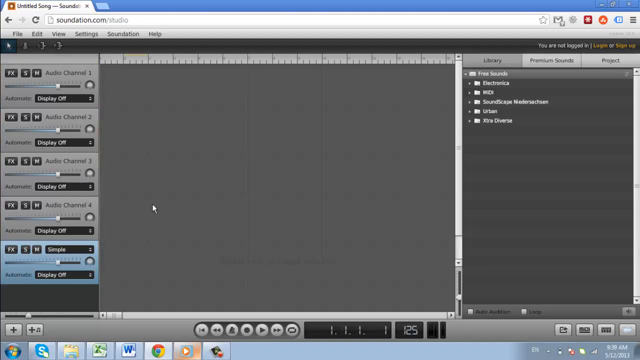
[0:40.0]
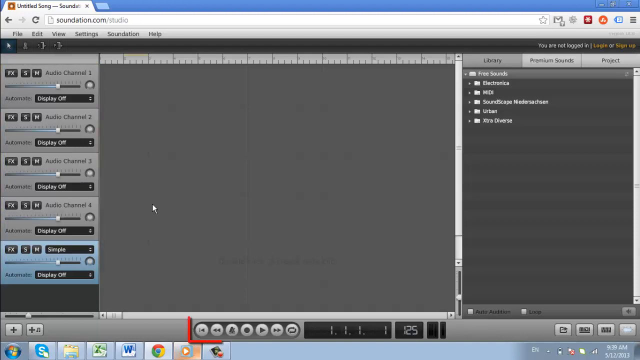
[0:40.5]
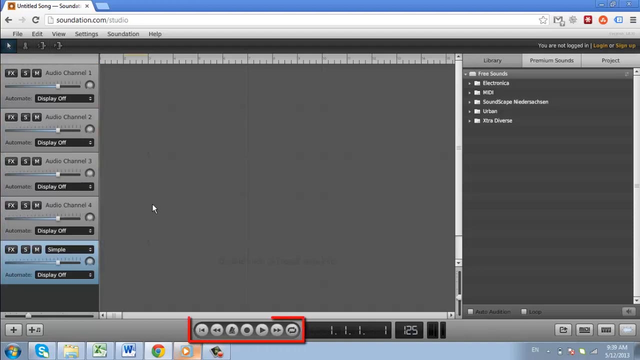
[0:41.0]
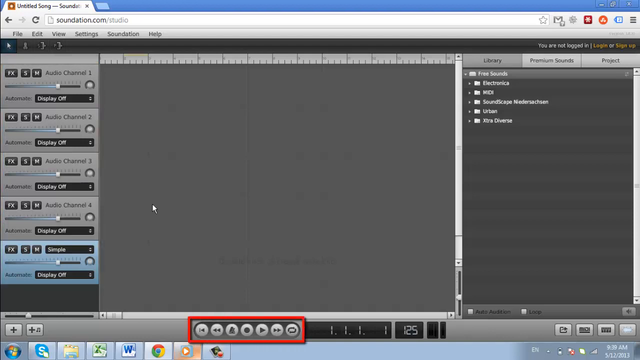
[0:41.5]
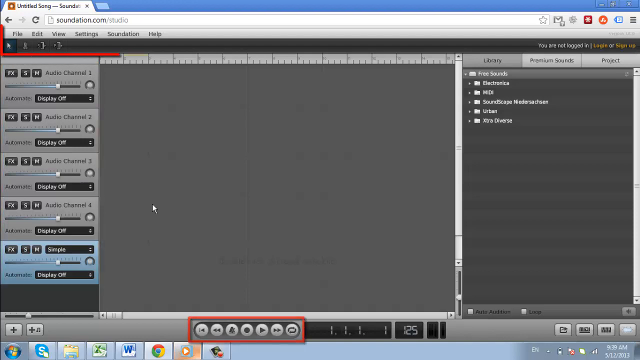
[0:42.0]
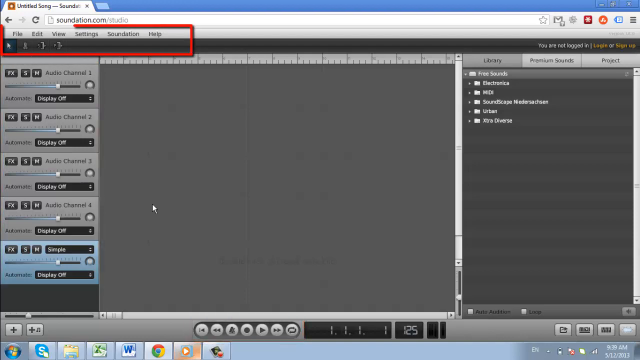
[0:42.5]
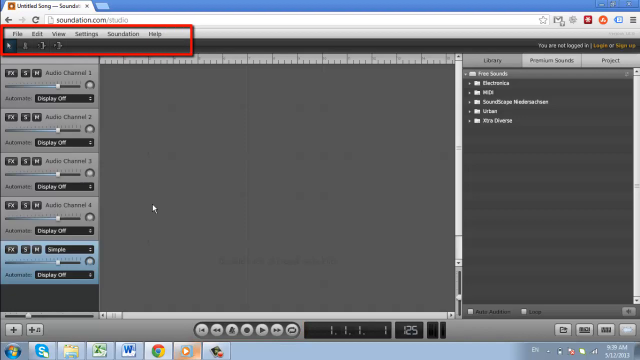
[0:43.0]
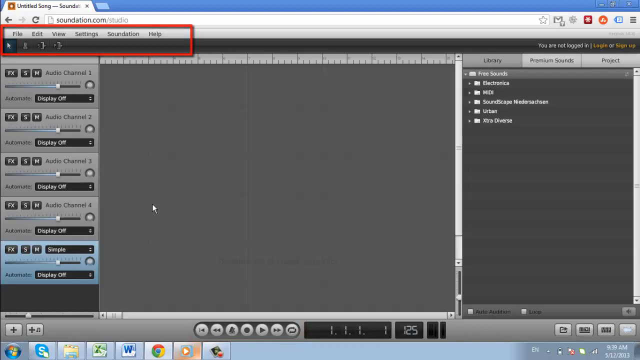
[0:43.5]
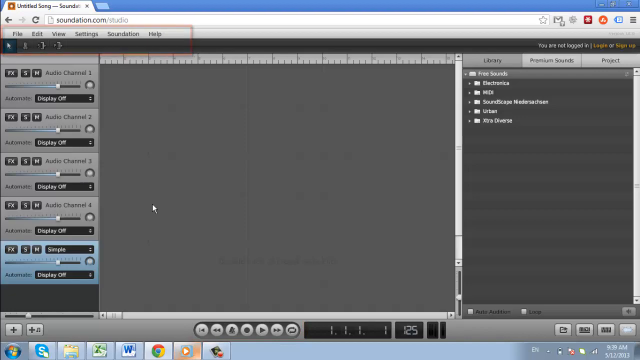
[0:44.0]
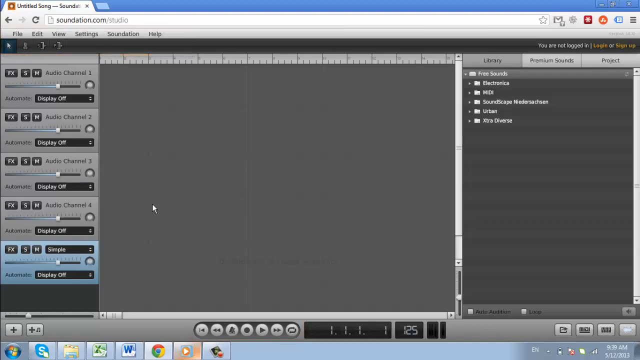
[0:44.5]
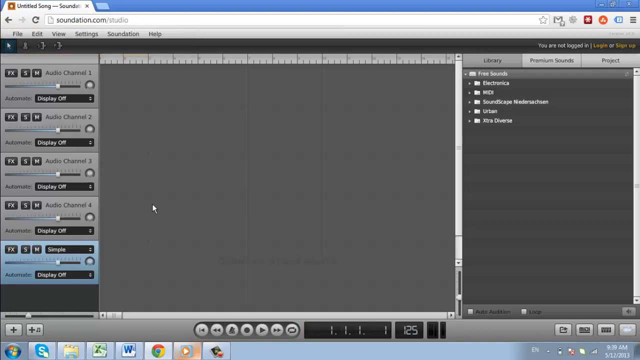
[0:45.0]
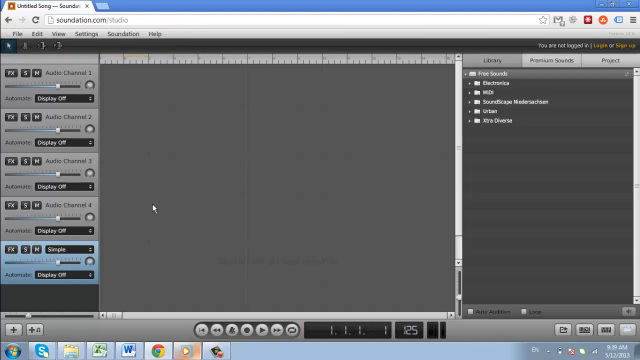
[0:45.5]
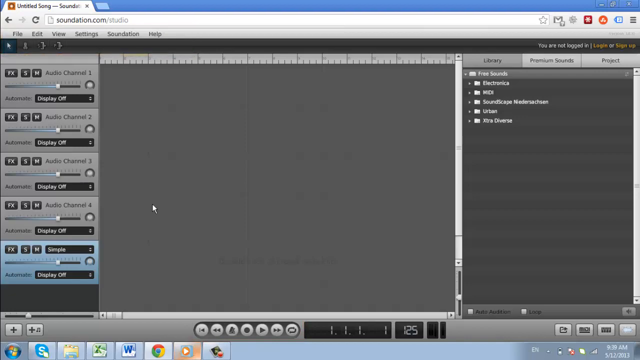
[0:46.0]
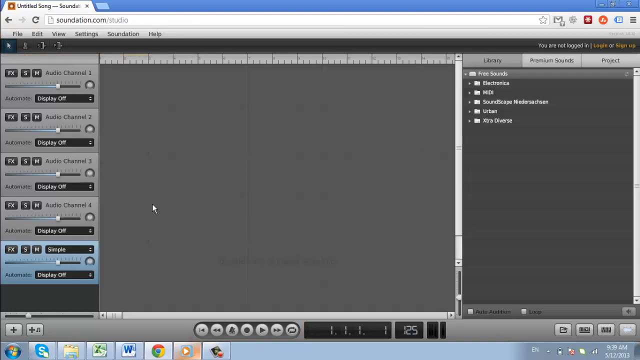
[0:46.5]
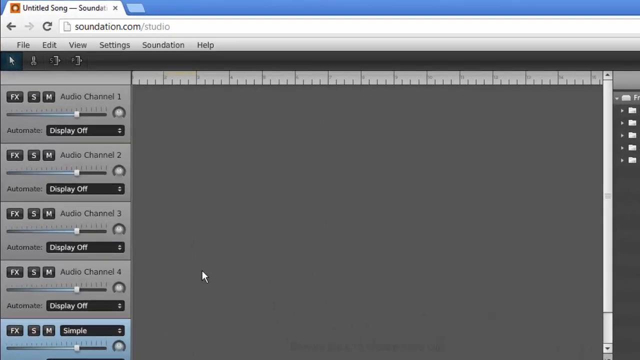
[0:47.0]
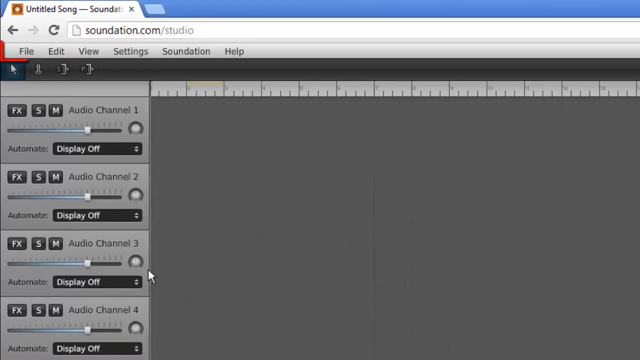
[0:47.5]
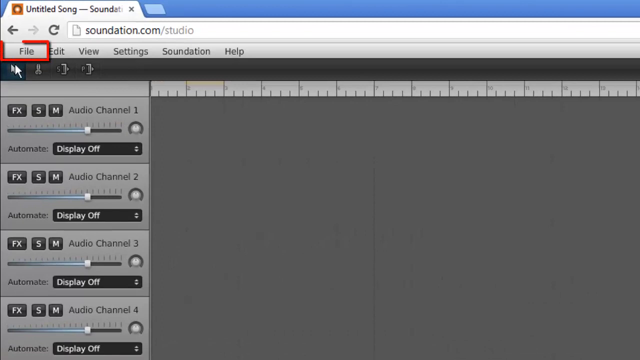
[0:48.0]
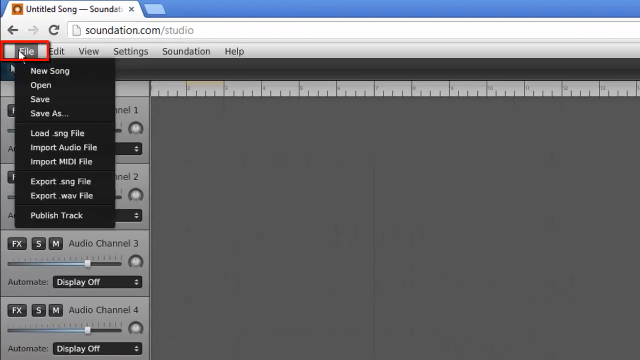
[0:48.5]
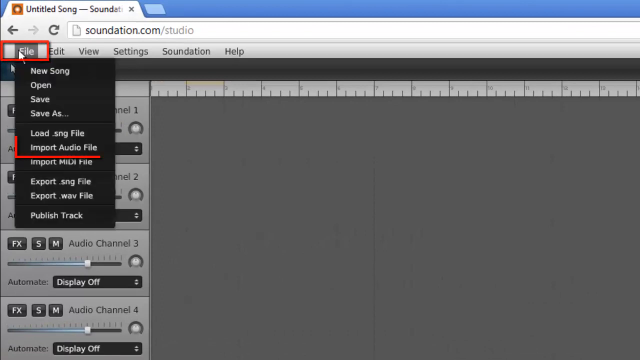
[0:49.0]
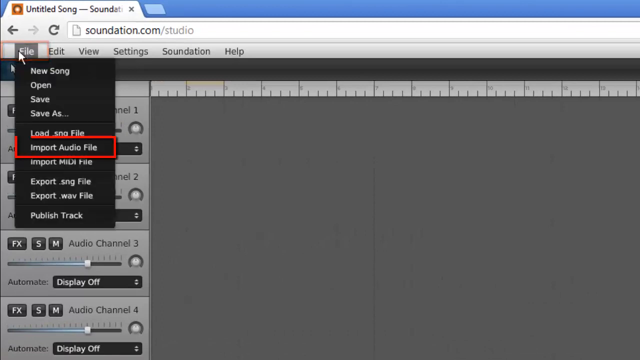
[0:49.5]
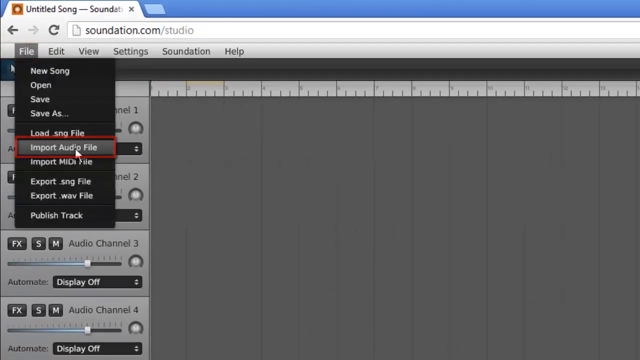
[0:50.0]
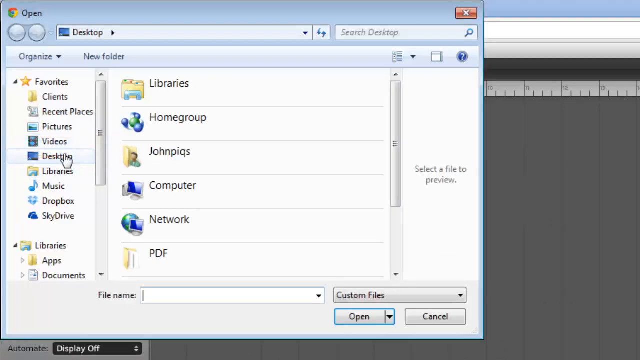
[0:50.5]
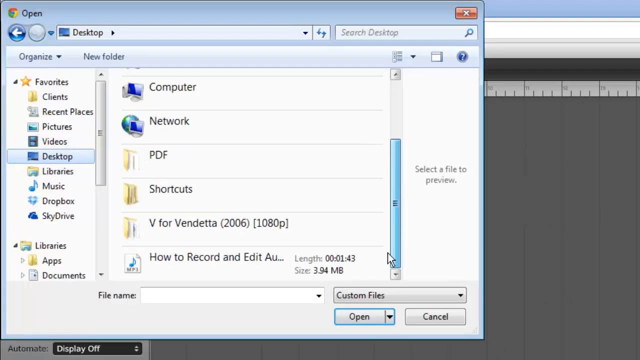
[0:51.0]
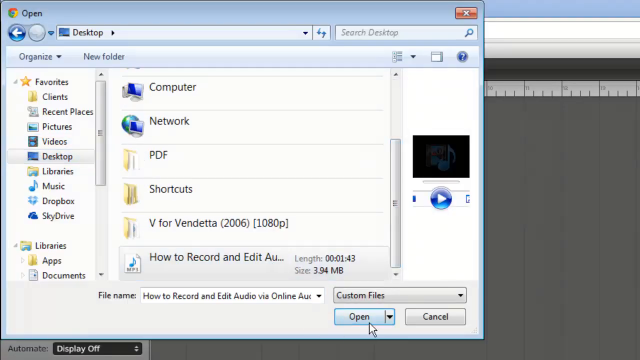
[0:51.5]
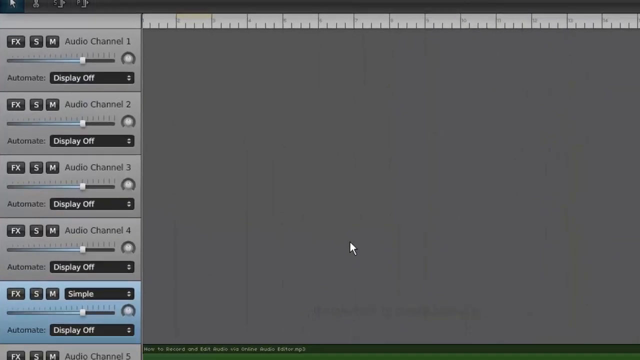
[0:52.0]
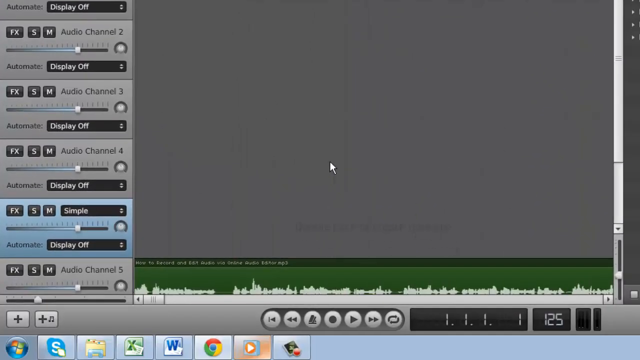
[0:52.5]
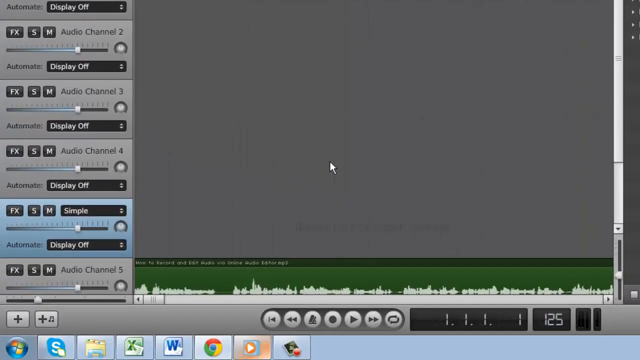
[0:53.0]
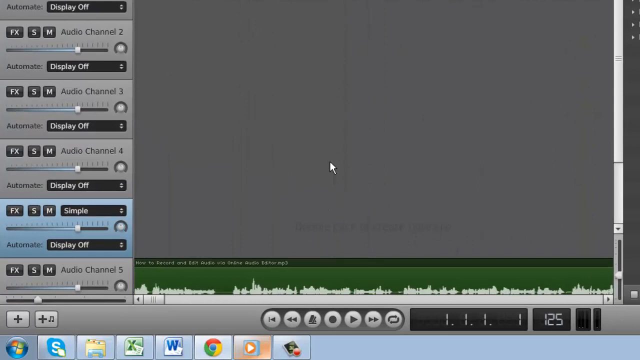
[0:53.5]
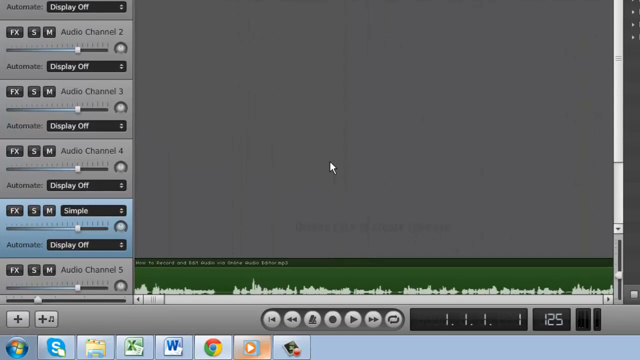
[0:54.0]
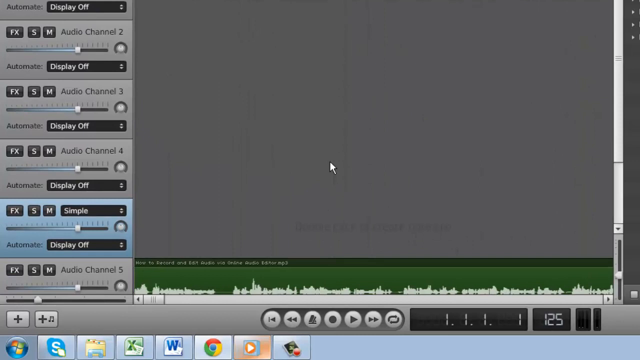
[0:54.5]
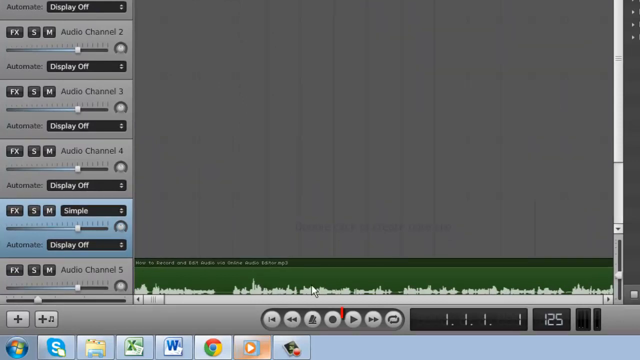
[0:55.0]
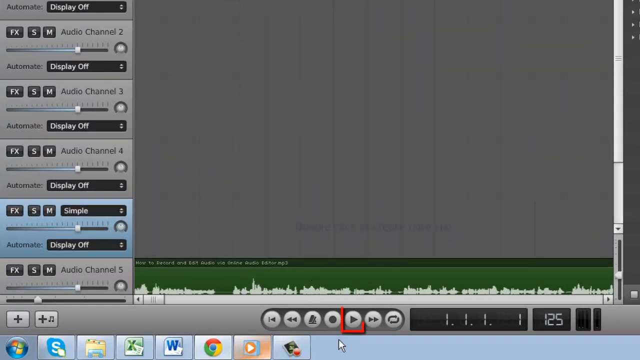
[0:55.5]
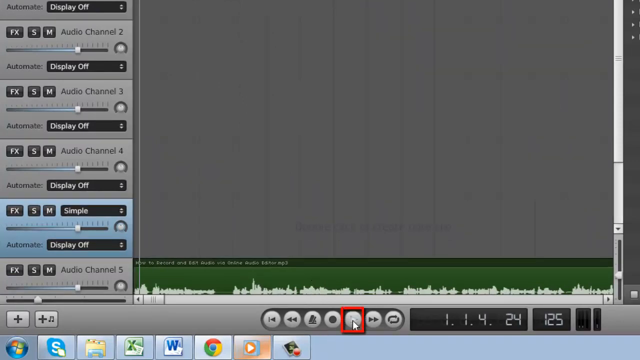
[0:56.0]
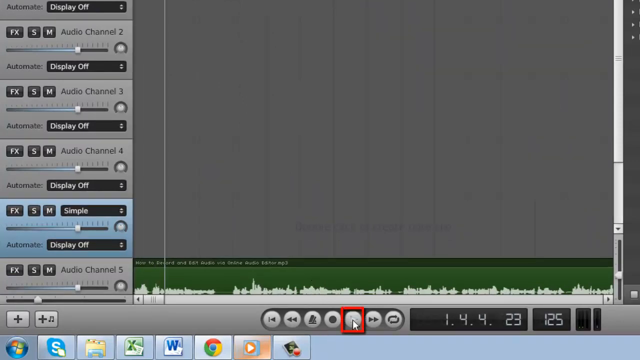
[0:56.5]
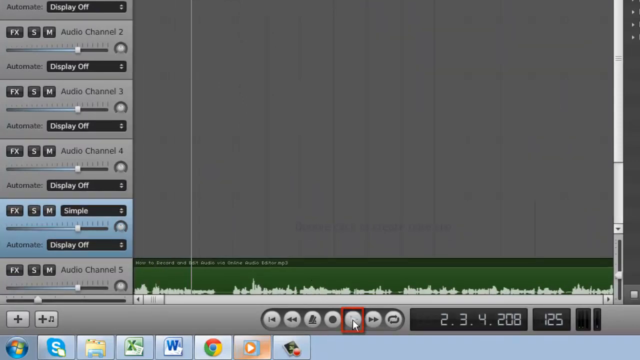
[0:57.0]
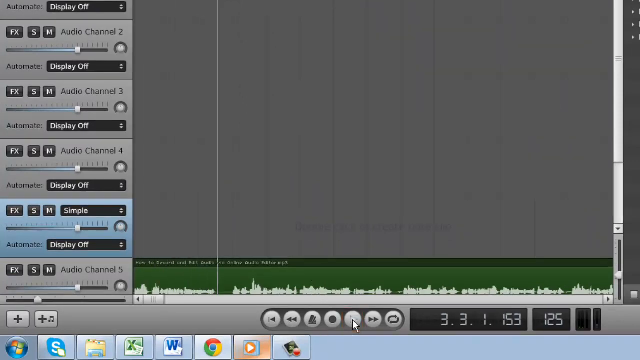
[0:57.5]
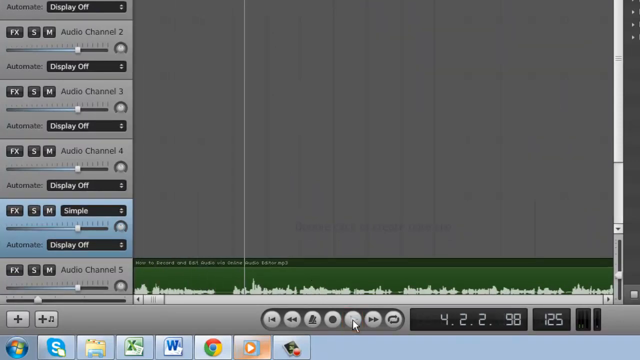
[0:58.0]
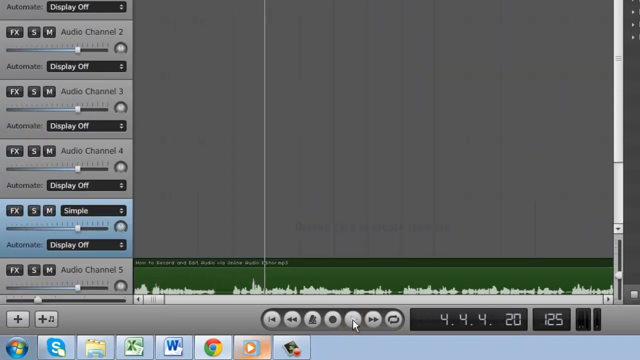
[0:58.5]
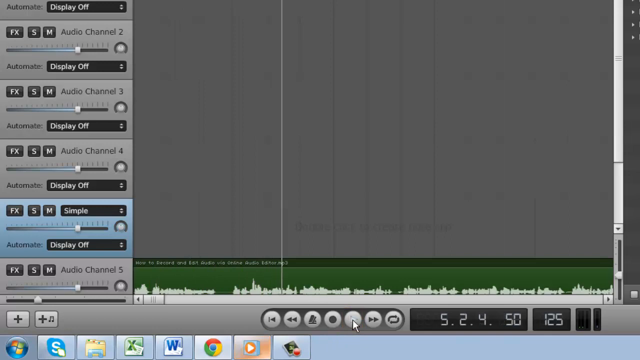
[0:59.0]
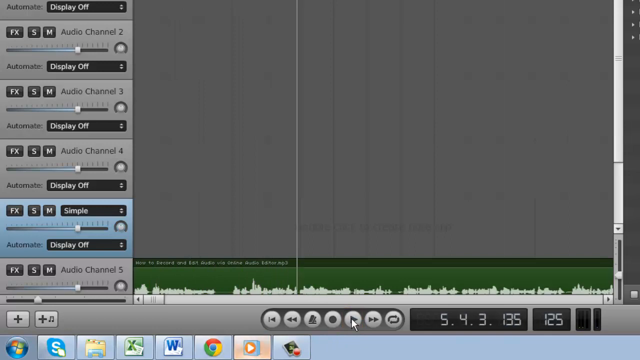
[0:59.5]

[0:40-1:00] A web-based sound editing program is open in the browser, built into the website rather than being its own standalone app or program. The URL reads soundation.com/studio. The program shows various switches and mixers, as well as the option to open various mixing channels. At the very bottom are play buttons, which are circled with a red box. The same red box then boxes the file settings at the top left of the webpage, and the view zooms in on the file settings, boxing the file tab in red. The user interacts with the file tab, turning it gray and opening a dropdown menu with options that read "new song," "open," "save," "save as," "load.smg file," "import audio file," "import MIDI file," "export.smg file," "export.wav file," and "publish track." The "import audio file" option is boxed with the red box. The user clicks on it, opening a file explorer window, selects the desktop on the left, and then selects an audio file named "how to record and edit audio via online audio." This opens a single audio track on the fifth track of the browser audio mixing website.